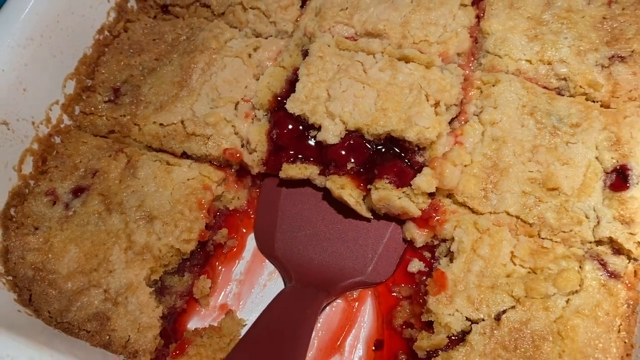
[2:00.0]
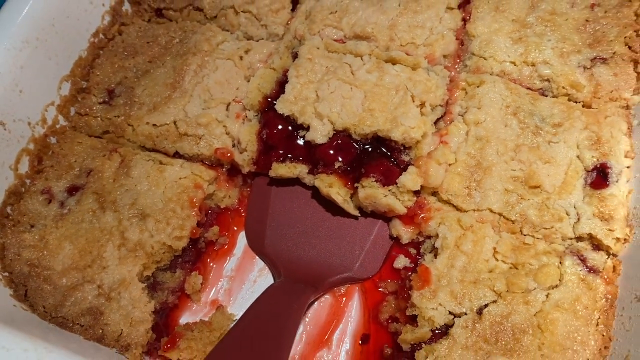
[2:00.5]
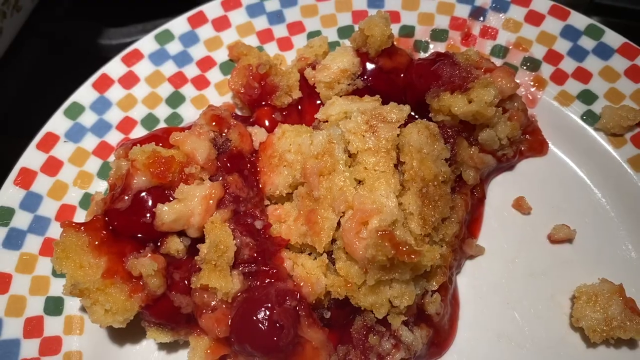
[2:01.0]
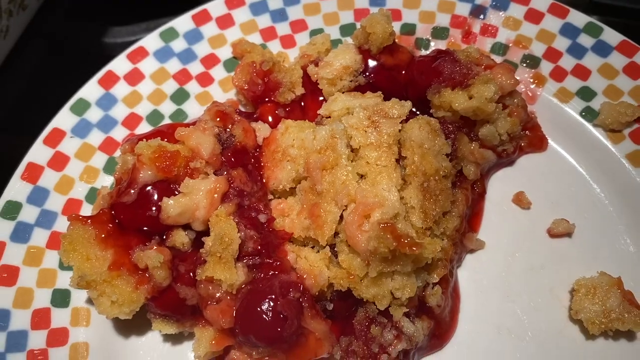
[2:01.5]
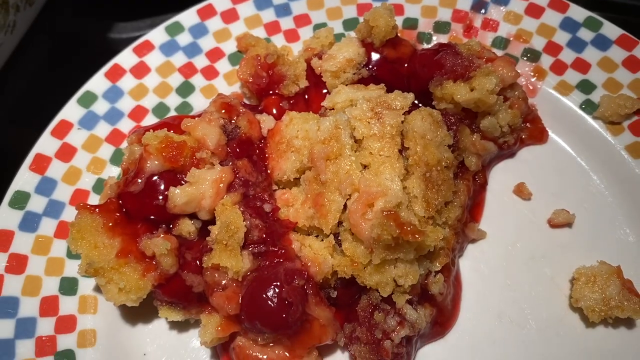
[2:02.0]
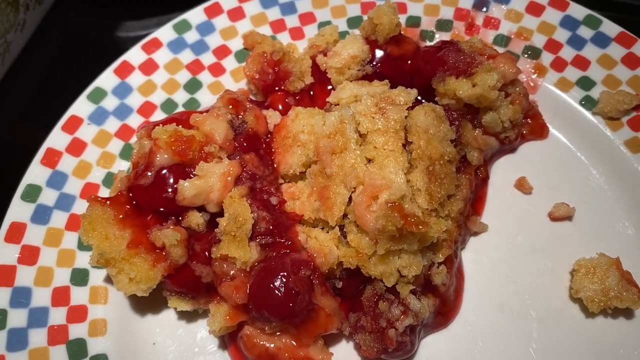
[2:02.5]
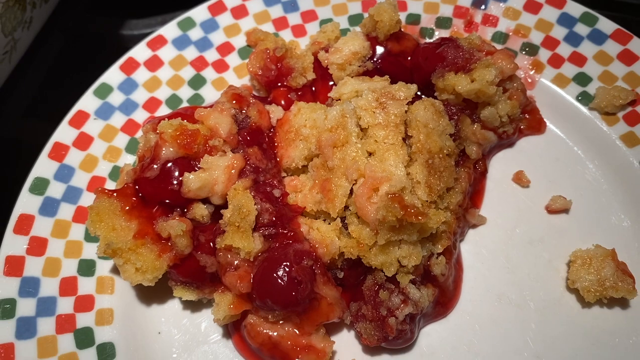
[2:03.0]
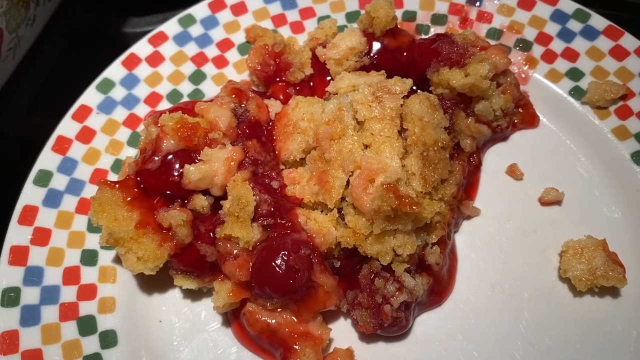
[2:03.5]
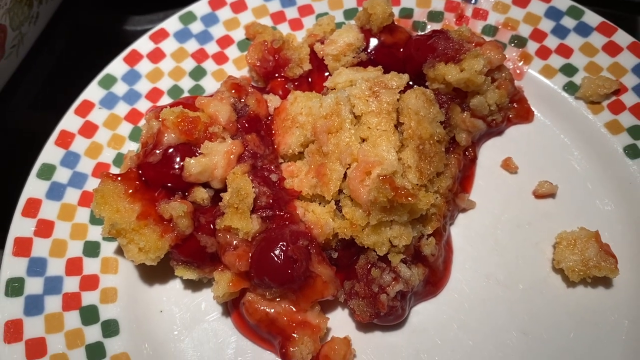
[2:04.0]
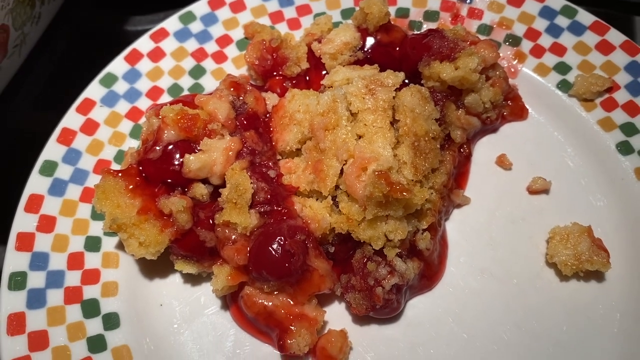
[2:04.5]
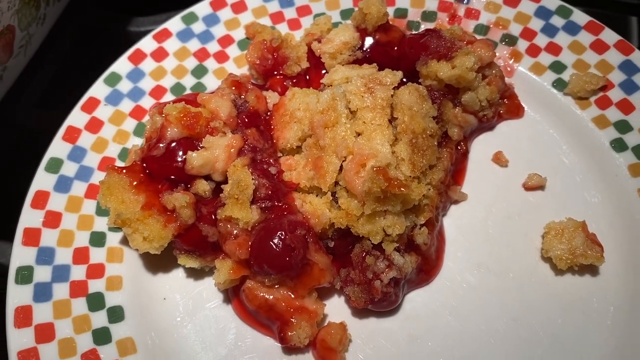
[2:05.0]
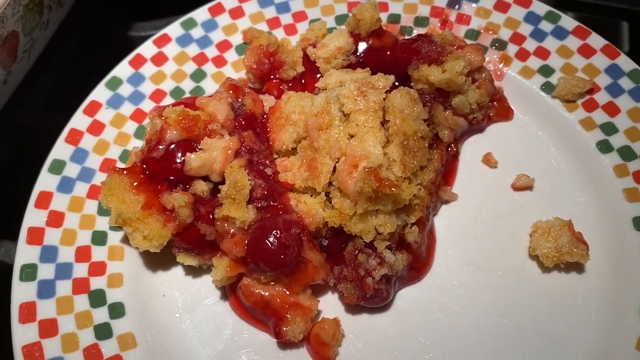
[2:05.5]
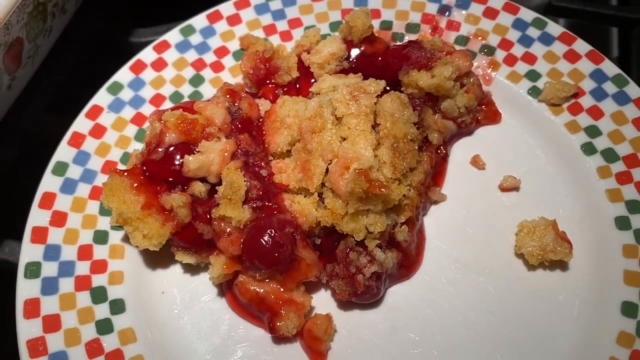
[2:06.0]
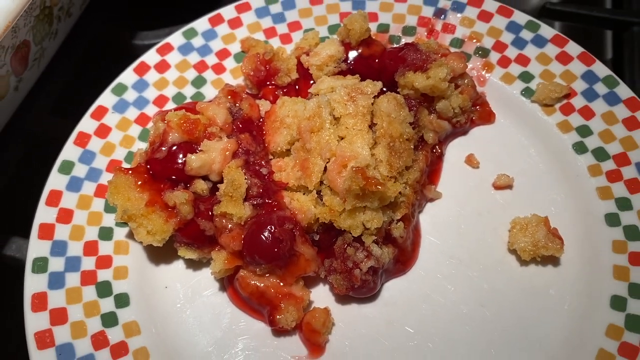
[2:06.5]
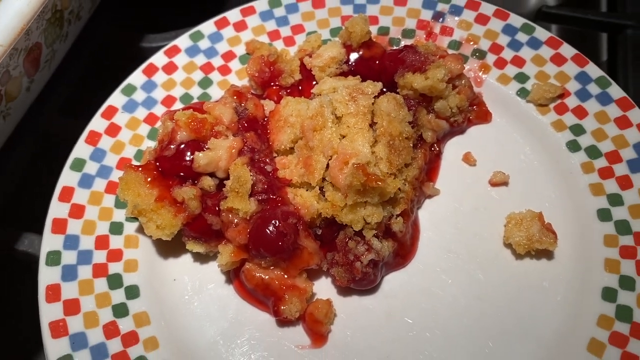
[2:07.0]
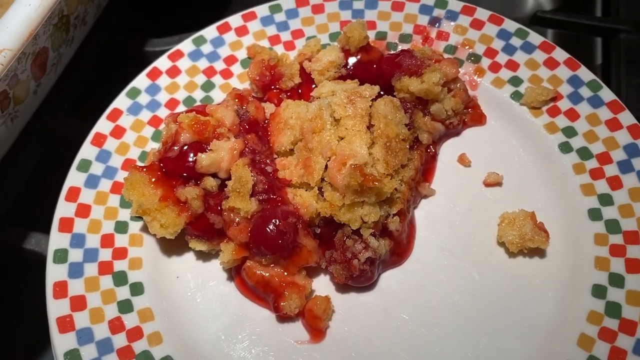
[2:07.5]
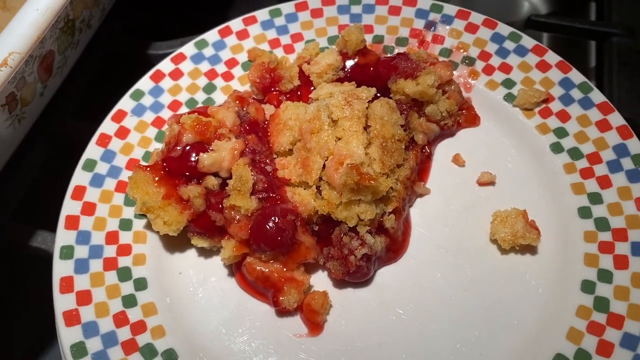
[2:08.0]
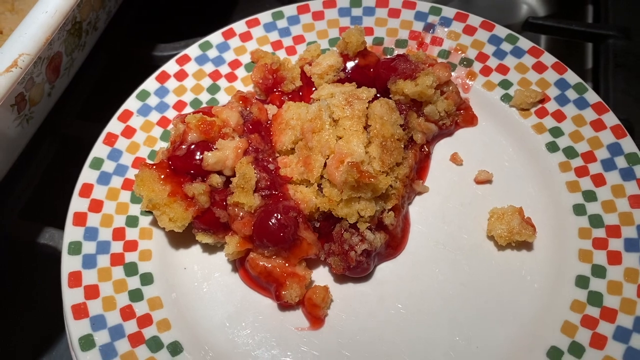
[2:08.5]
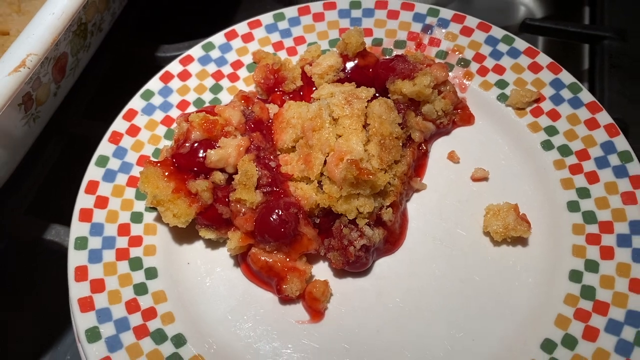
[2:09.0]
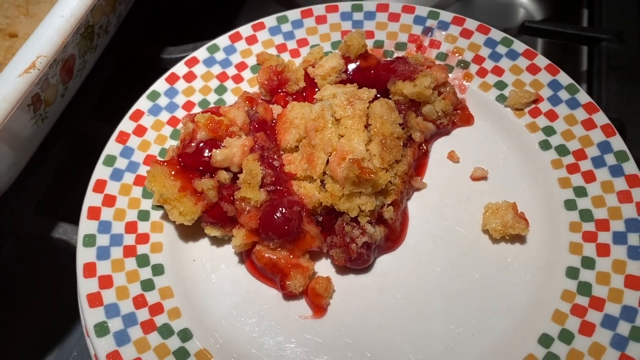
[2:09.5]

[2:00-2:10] Freshly baked pastry is in a large, square ceramic baking dish. It has been divided into squares, and a deep red spoon is stuck underneath one of the squares as if it is about to be scooped up. Next, a close-up shows a serving of the pastry on a flat, round white ceramic plate with decorative checkered squares in different colors around the edges. The crust looks a light, rich golden brown, and the cherry filling oozes out throughout the crust. There are two crumbs on the right side of the portion.